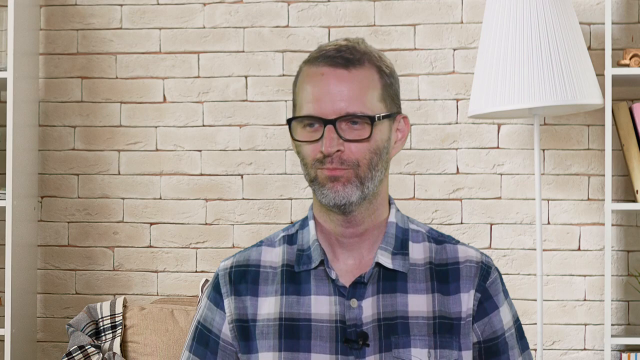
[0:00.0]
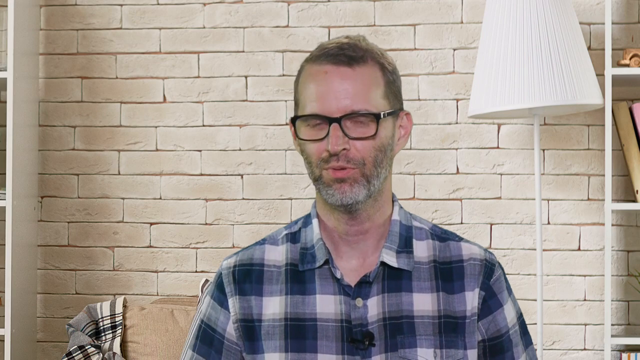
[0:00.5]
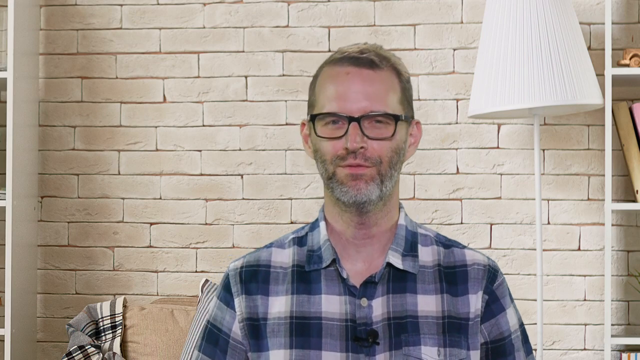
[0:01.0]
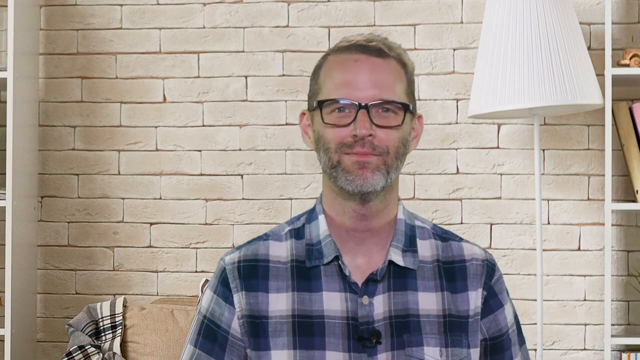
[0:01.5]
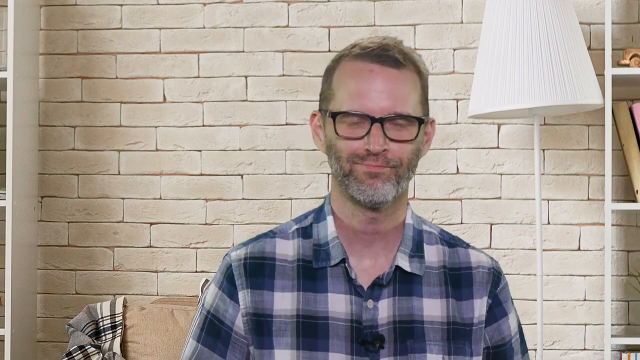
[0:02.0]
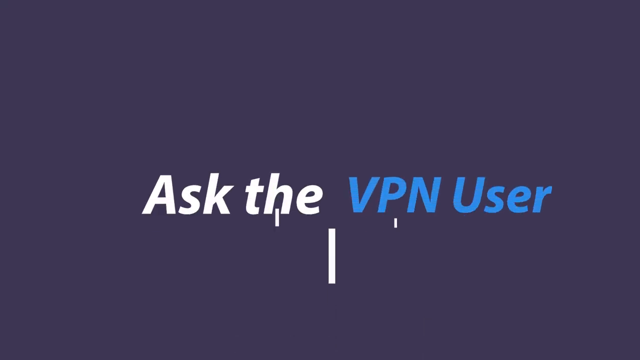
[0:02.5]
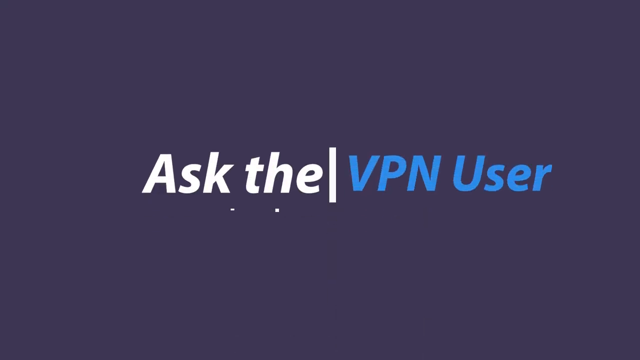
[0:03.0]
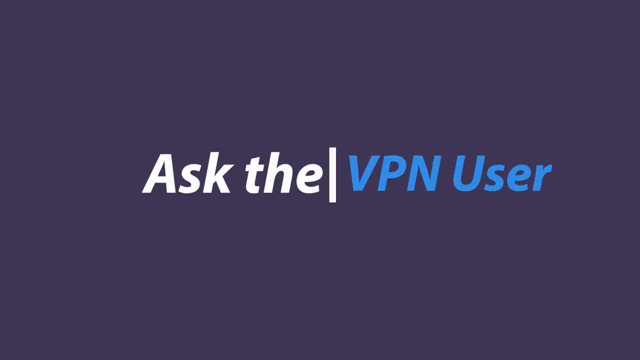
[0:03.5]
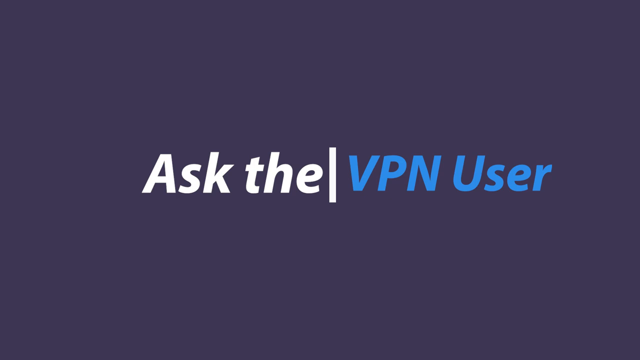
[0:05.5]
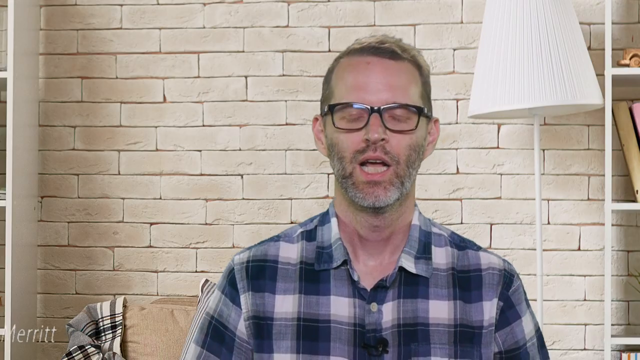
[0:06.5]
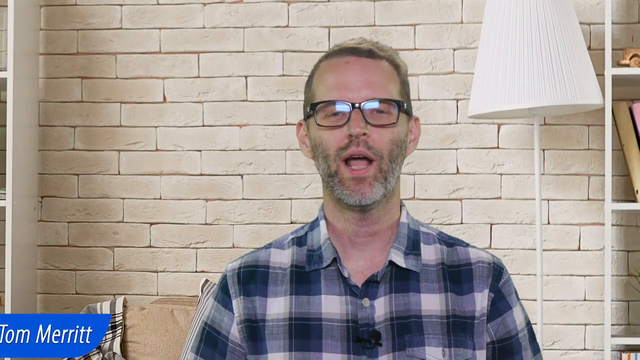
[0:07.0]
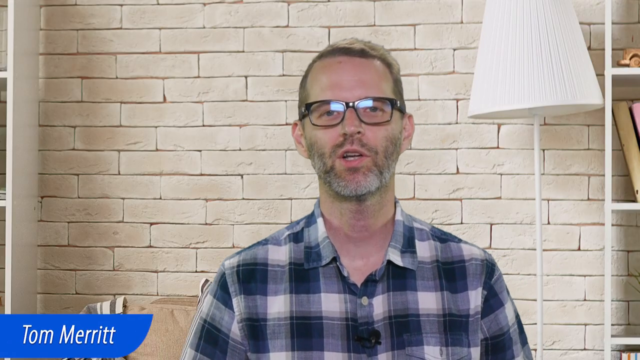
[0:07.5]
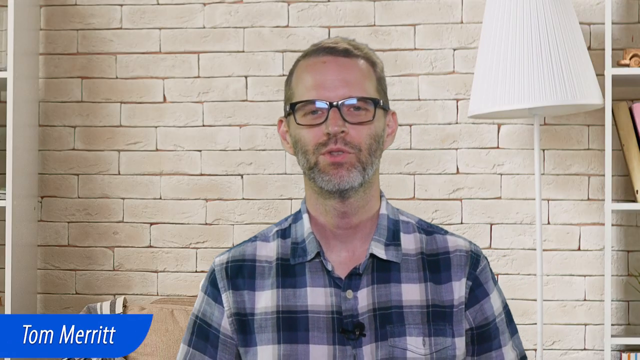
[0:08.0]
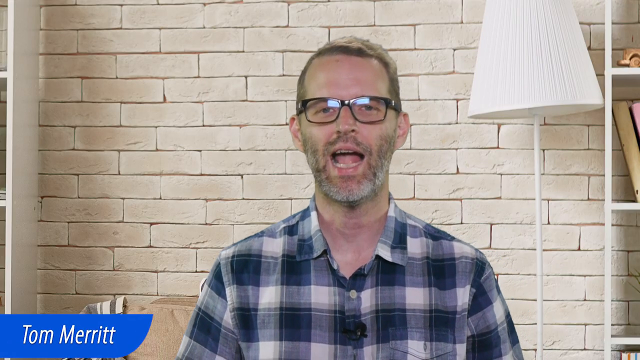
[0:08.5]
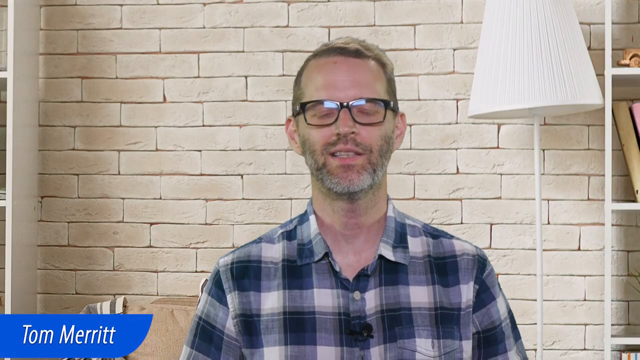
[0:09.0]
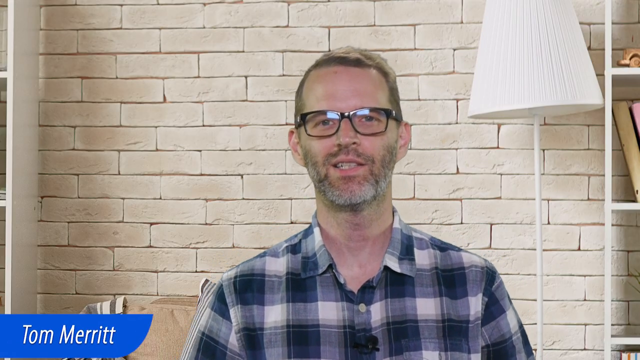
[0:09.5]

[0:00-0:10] A man wearing a kind of blue-black shirt and glasses, with kind of dark blondish hair, speaks to the camera in front of a white brick wall. The shot changes to a purple background where a person with white hair, apparently the animator, passes through, and then it cuts back to the man who was talking earlier. A text box with what looks like a blue background appears at the bottom showing the man's name.